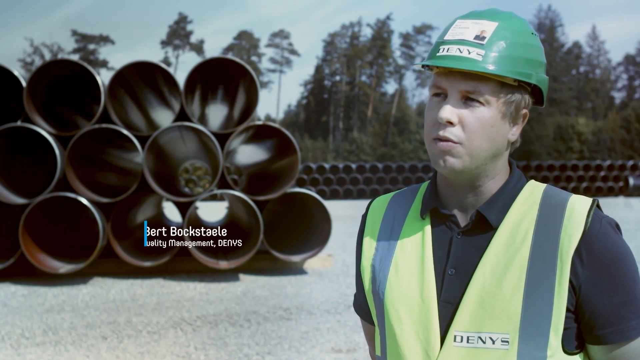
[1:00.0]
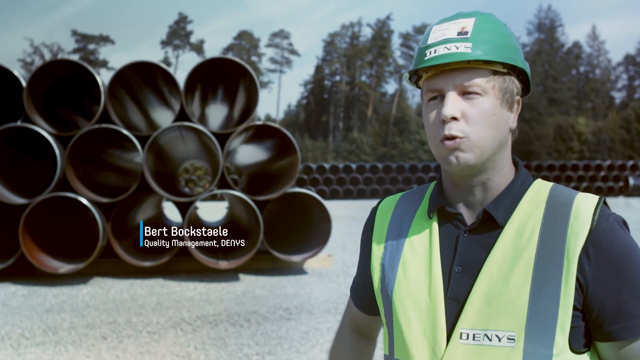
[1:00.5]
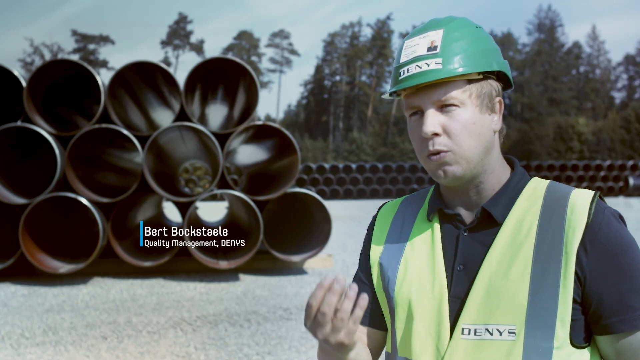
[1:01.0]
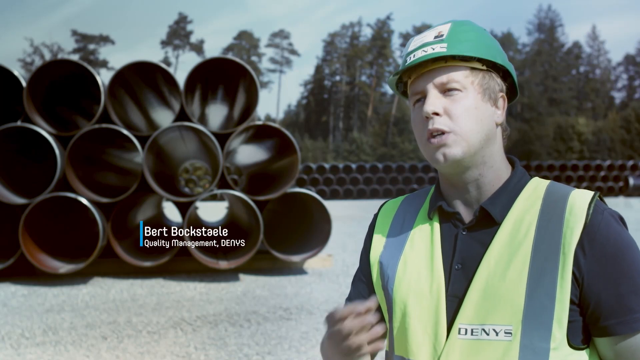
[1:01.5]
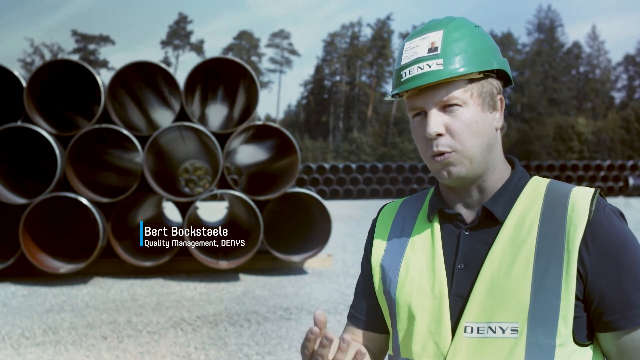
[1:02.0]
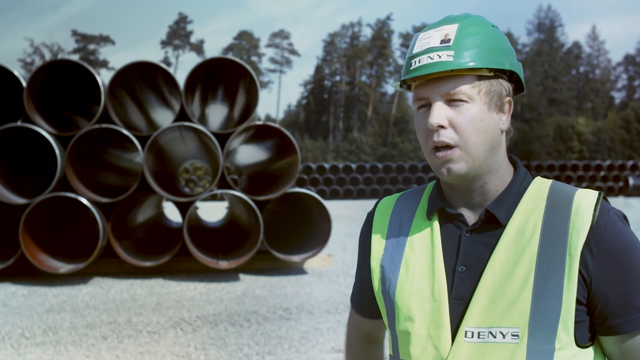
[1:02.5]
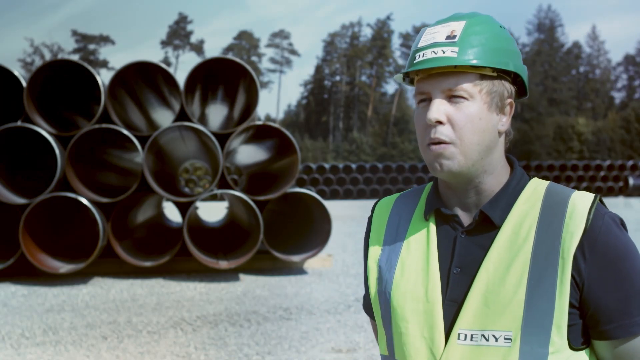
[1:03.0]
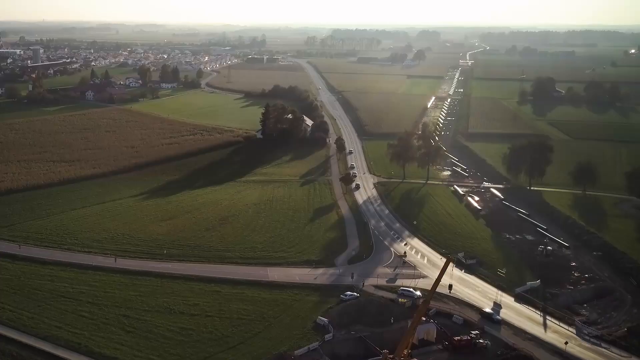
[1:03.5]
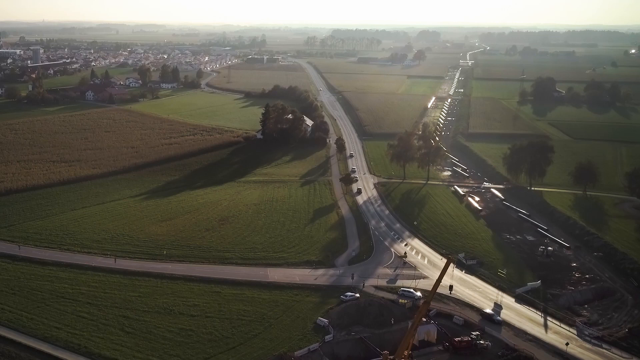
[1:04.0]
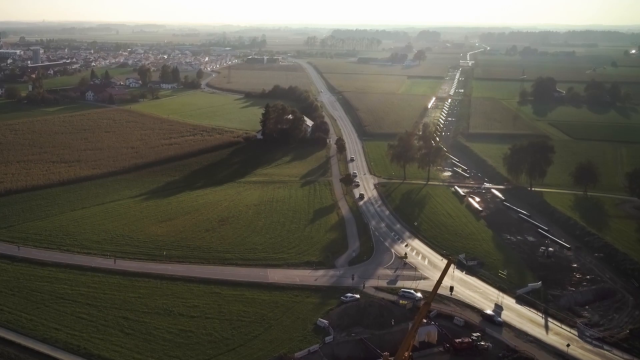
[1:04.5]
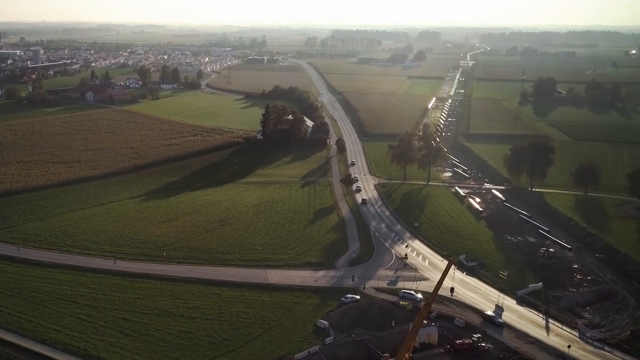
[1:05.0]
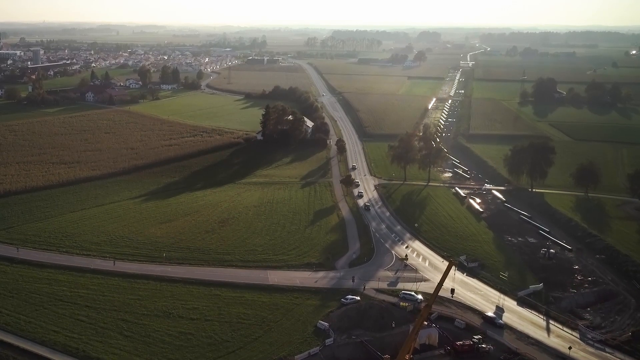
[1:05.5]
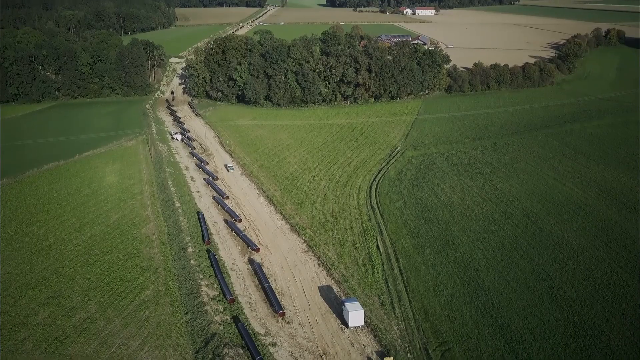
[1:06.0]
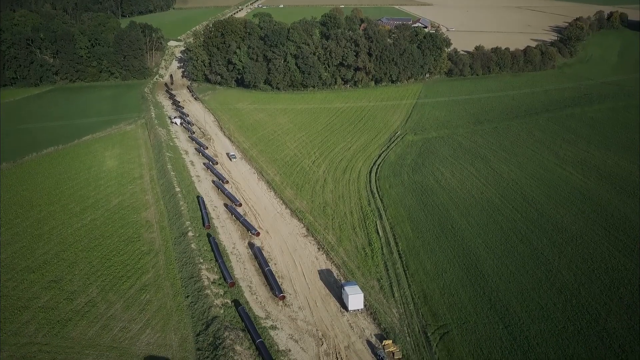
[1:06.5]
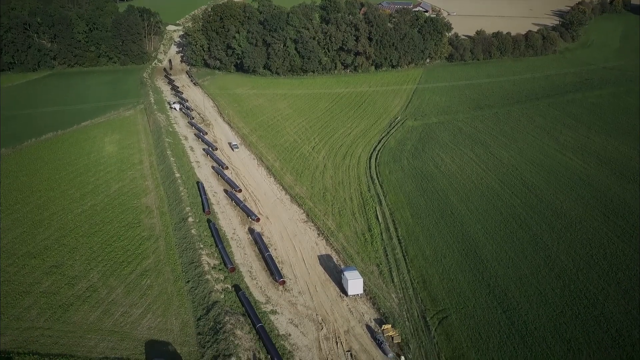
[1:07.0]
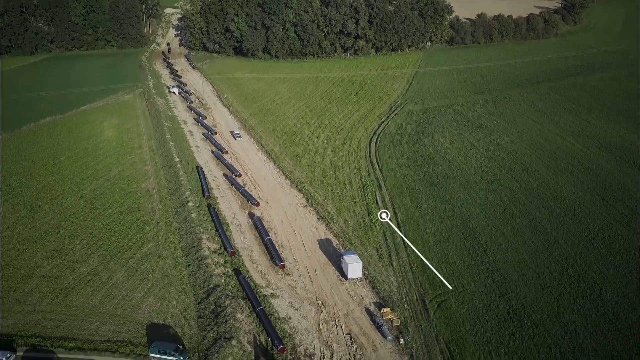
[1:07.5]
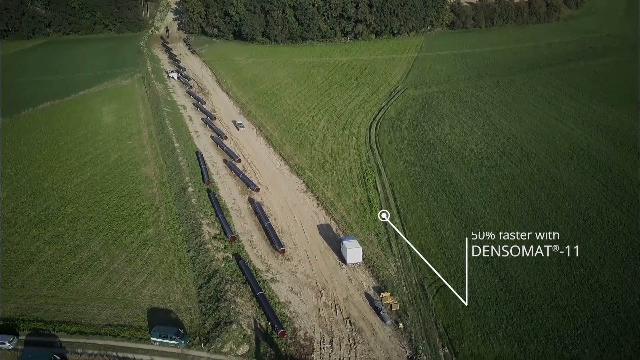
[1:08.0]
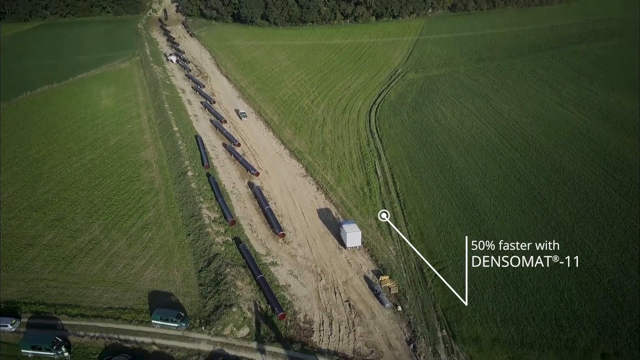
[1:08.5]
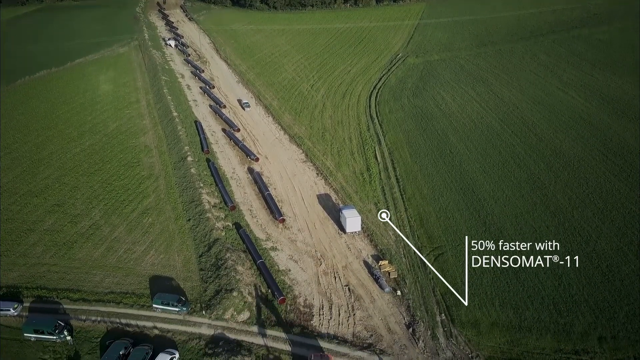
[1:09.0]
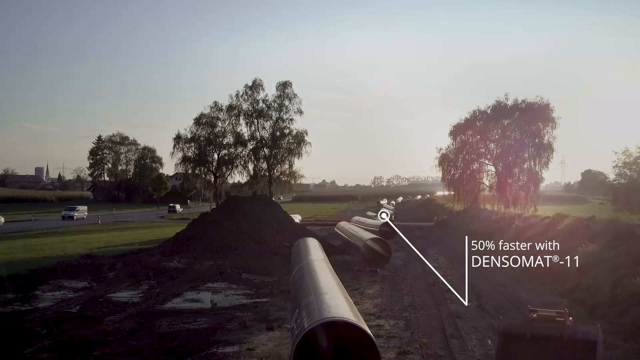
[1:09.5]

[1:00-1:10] A worker in a green hard hat, a yellow vest and a black shirt underneath speaks in front of a pipeline. Country roads appear with cars driving along them. The man's name is Bert Boxdale, and he is in management at the company. He speaks in front of unused pipes stacked for storage. Something that almost looks like a drone comes down beside the laid pipeline. A white line on the screen comes down, points, and heads back up, showing where the pipeline will be laid. The man speaks again in front of the pipes, with a lot of forest around. A vehicle that looks like that drone moves very fast next to the laid pipeline. The pipelines are placed in very remote country areas with no civilization.